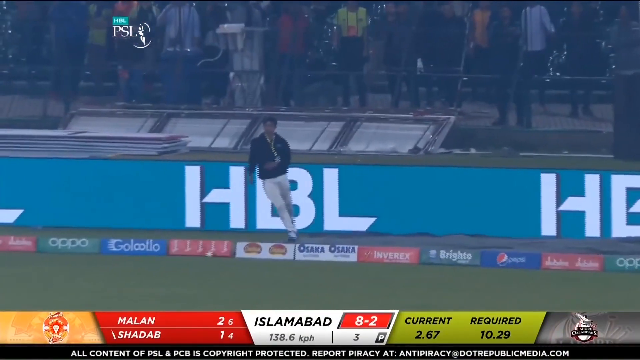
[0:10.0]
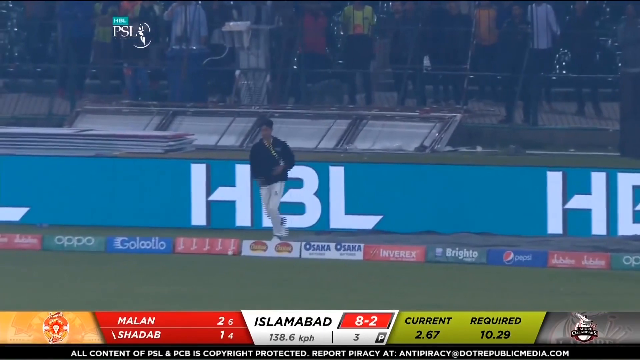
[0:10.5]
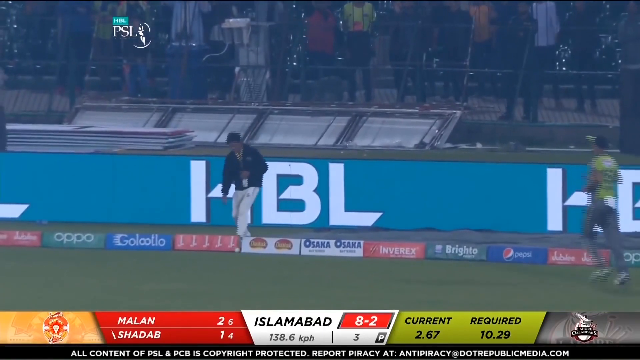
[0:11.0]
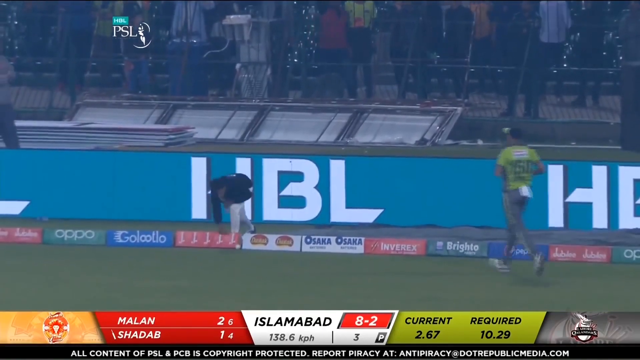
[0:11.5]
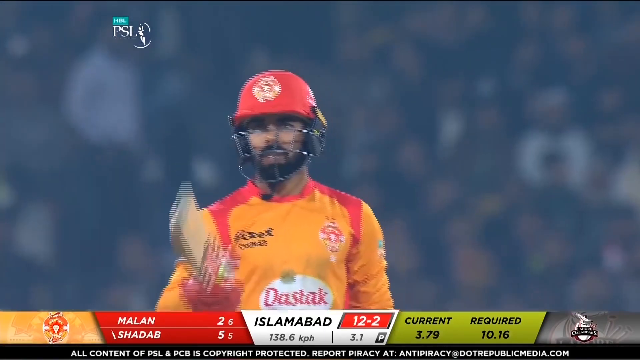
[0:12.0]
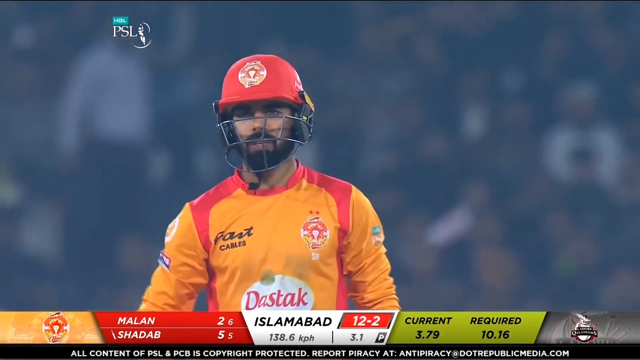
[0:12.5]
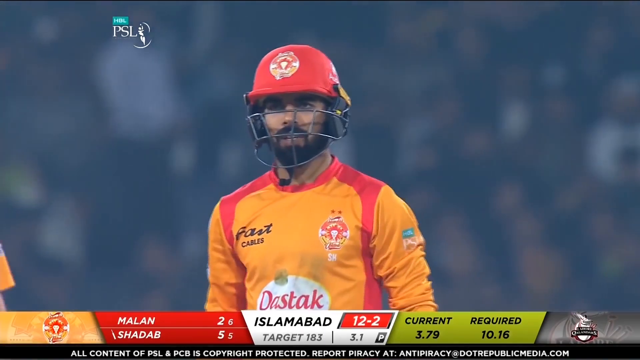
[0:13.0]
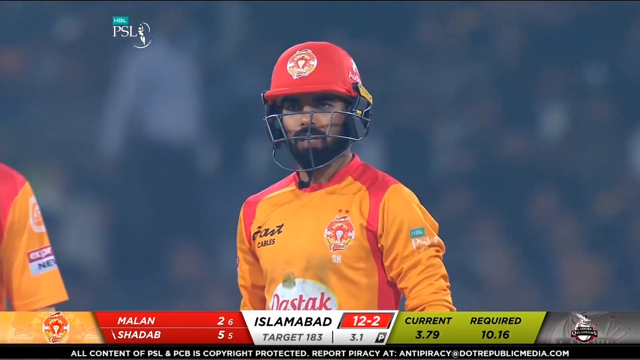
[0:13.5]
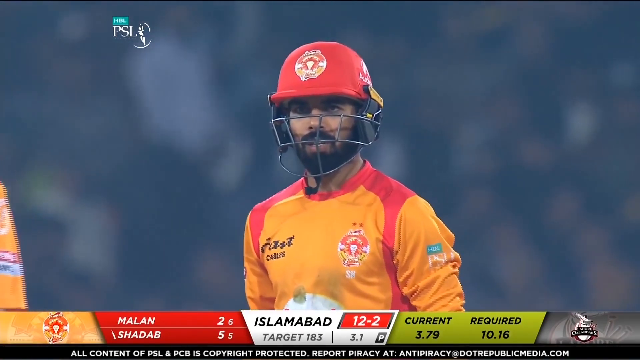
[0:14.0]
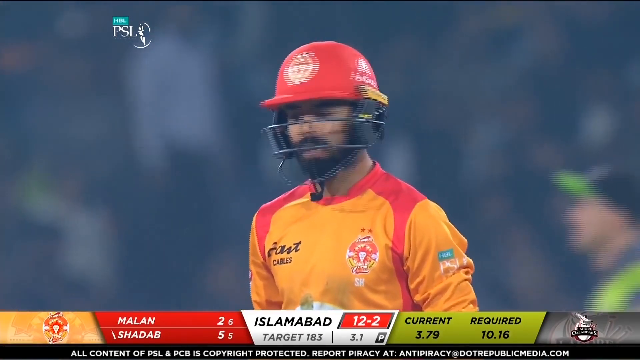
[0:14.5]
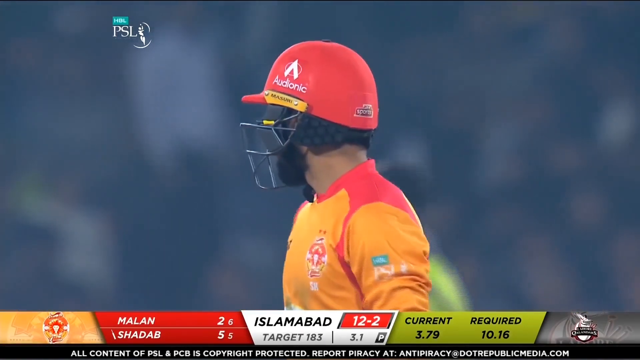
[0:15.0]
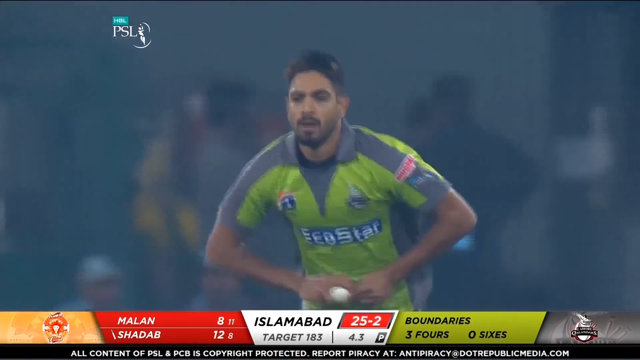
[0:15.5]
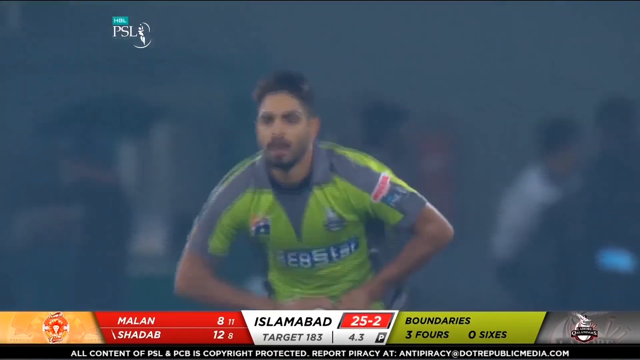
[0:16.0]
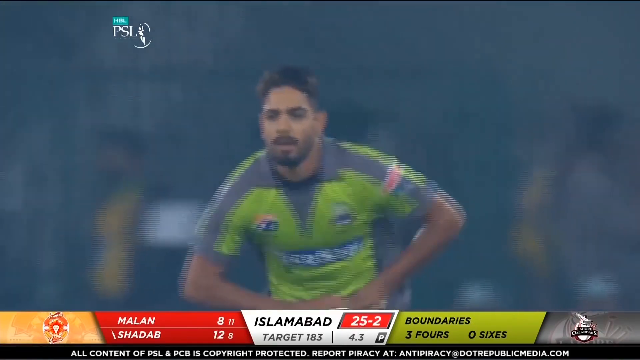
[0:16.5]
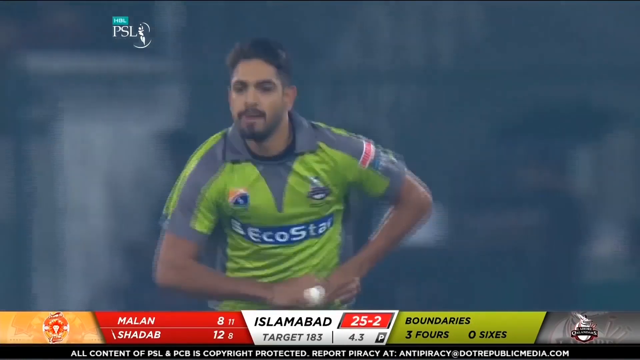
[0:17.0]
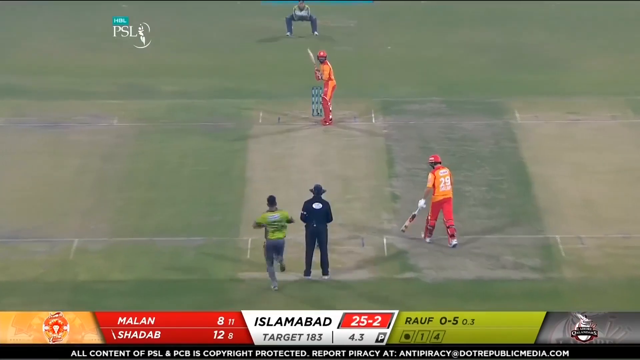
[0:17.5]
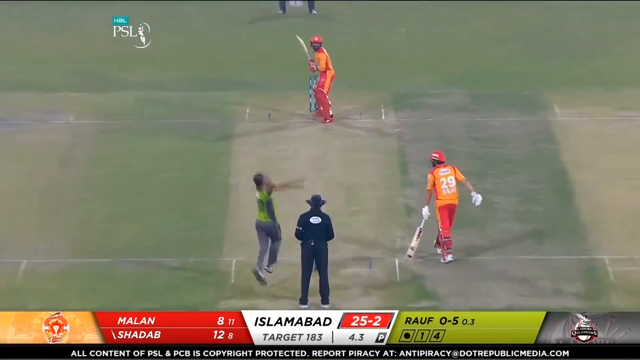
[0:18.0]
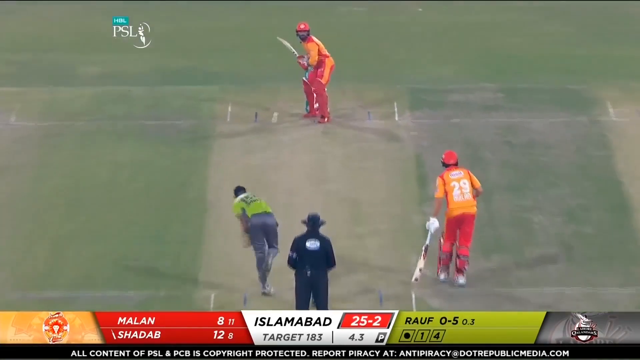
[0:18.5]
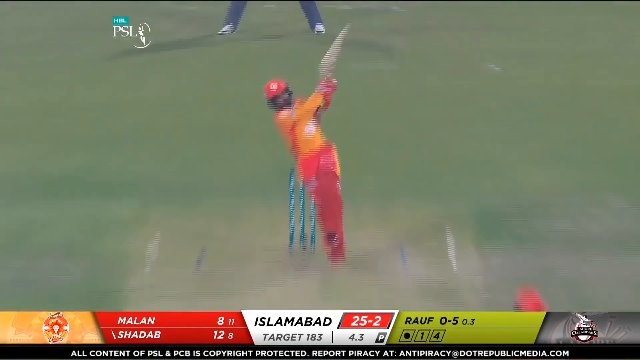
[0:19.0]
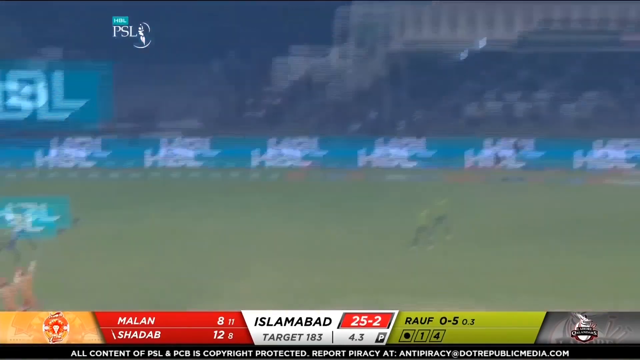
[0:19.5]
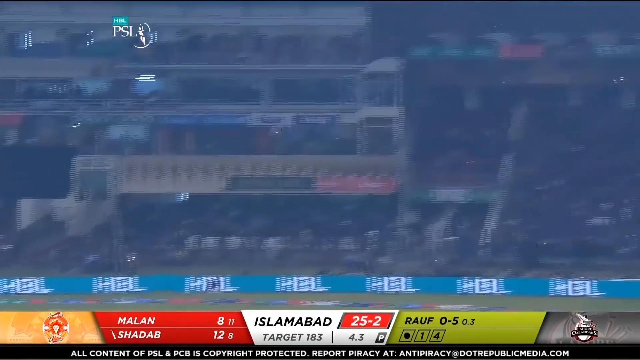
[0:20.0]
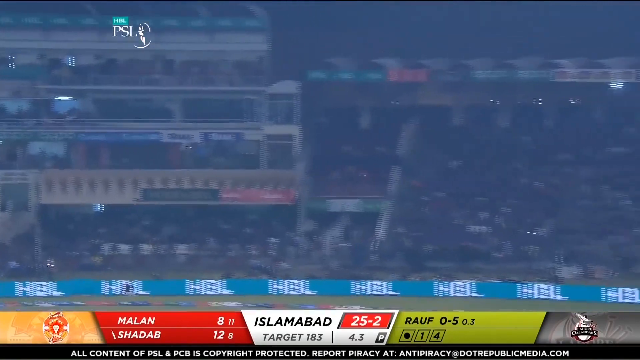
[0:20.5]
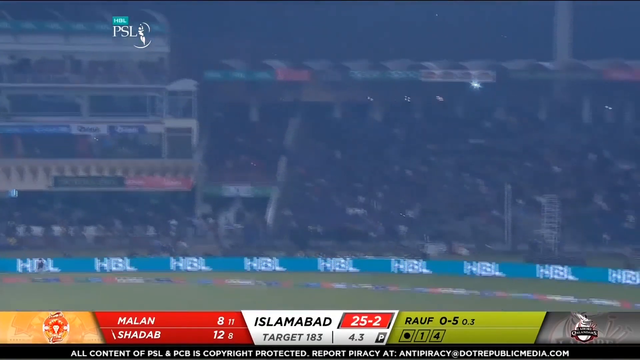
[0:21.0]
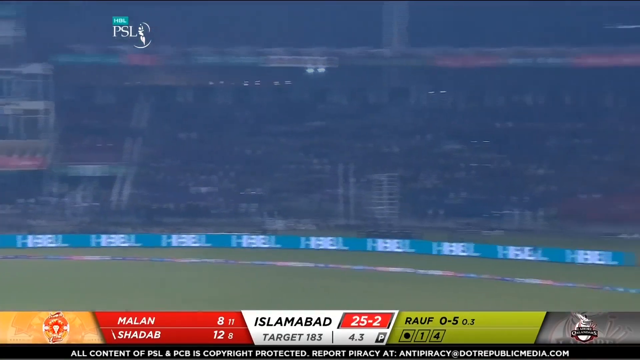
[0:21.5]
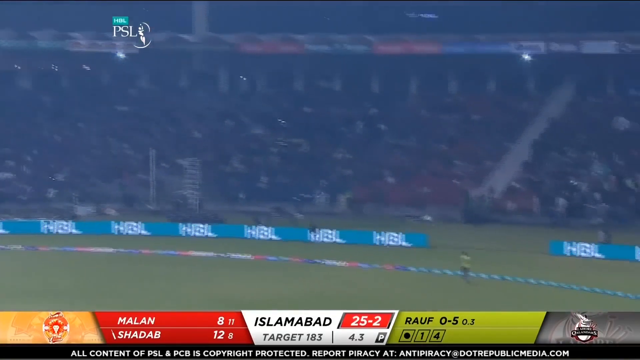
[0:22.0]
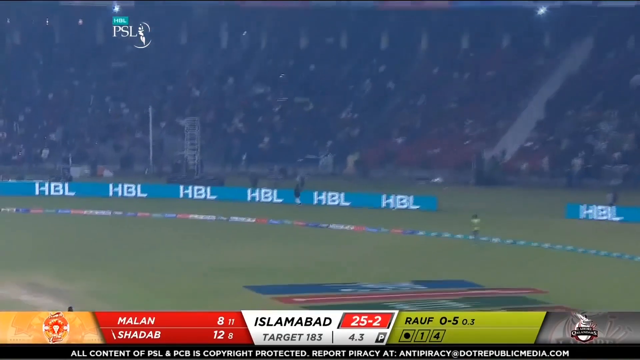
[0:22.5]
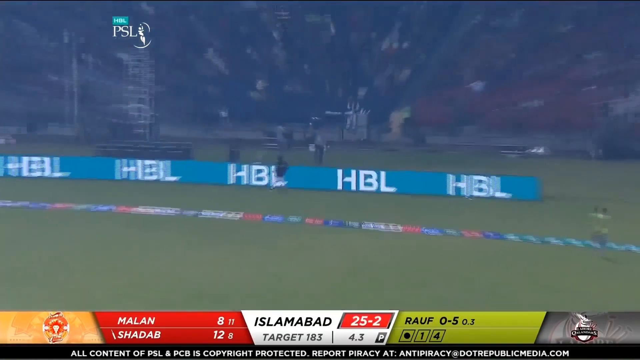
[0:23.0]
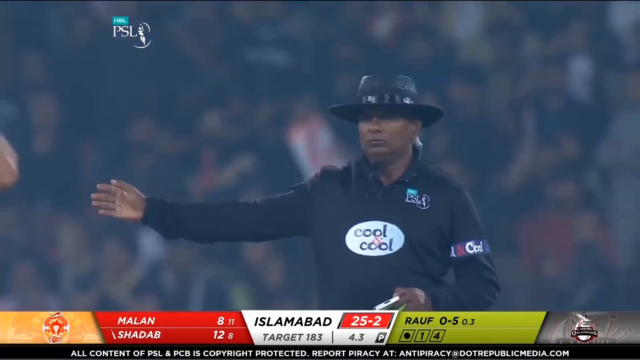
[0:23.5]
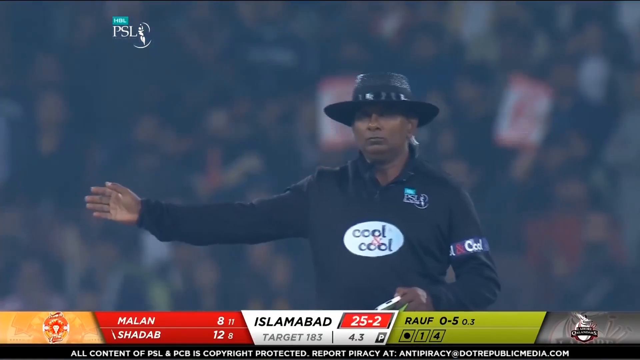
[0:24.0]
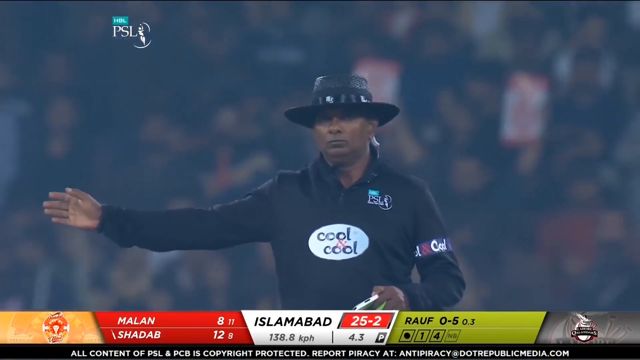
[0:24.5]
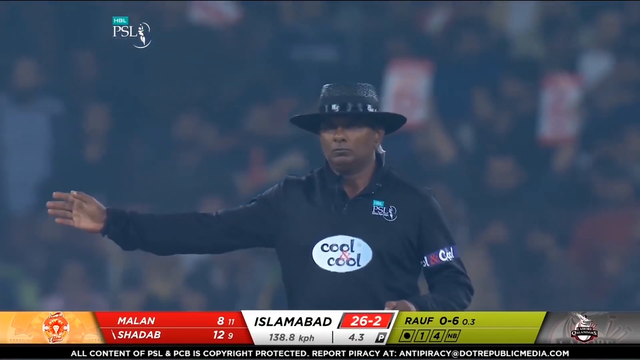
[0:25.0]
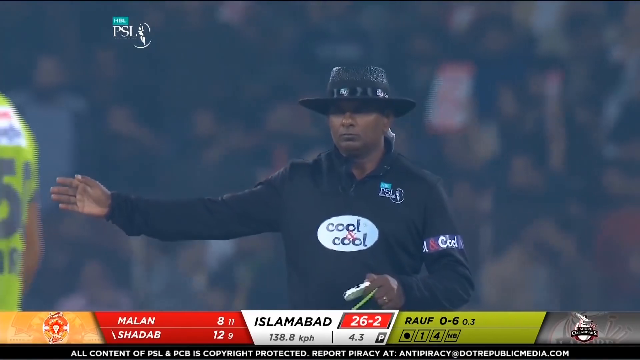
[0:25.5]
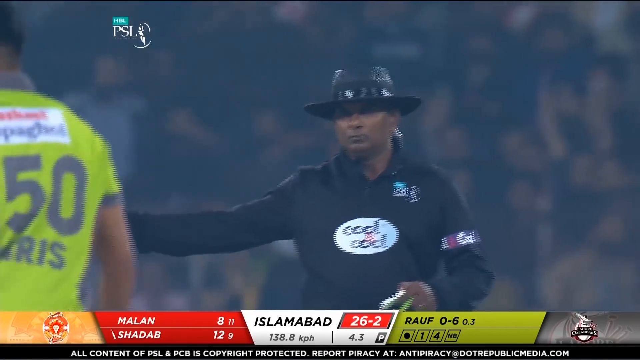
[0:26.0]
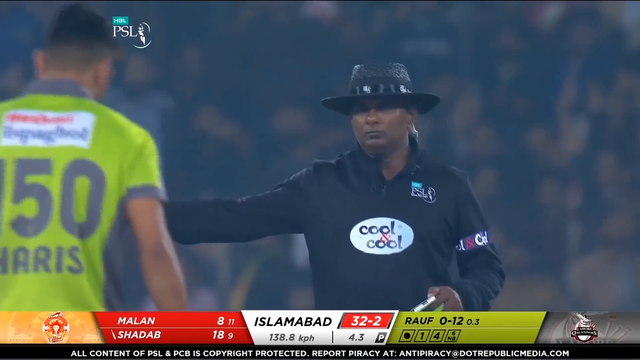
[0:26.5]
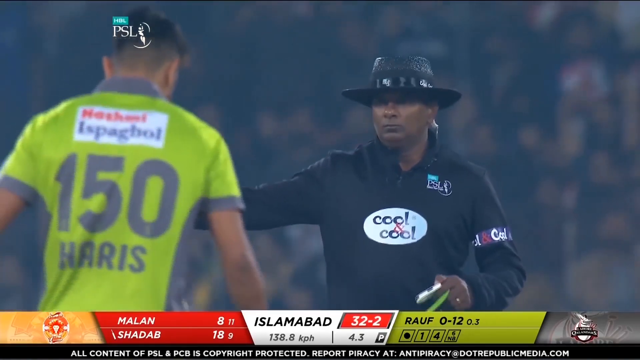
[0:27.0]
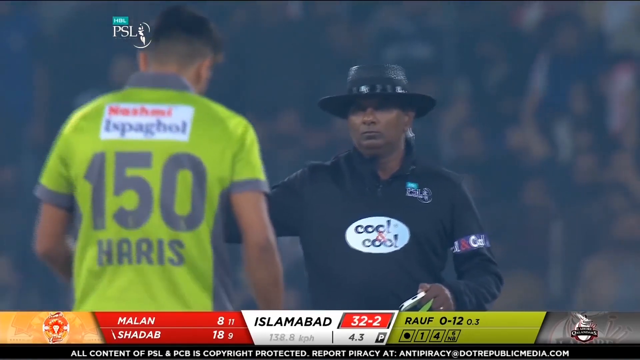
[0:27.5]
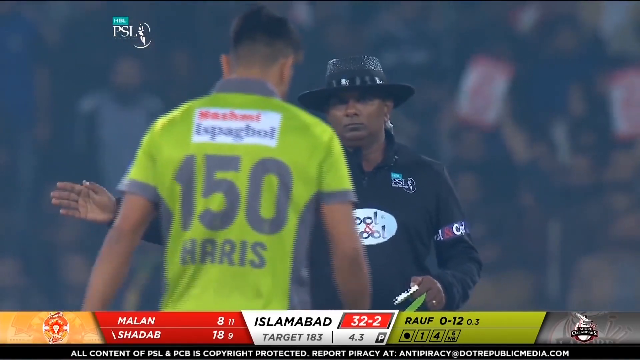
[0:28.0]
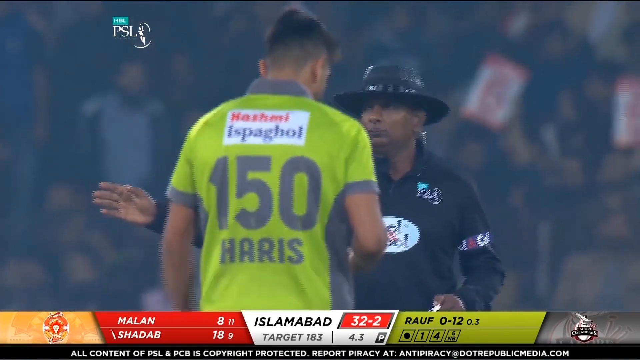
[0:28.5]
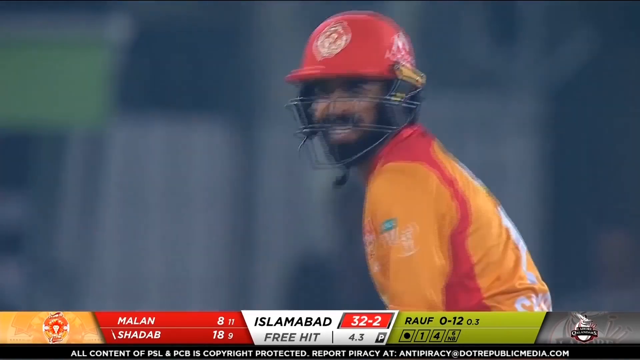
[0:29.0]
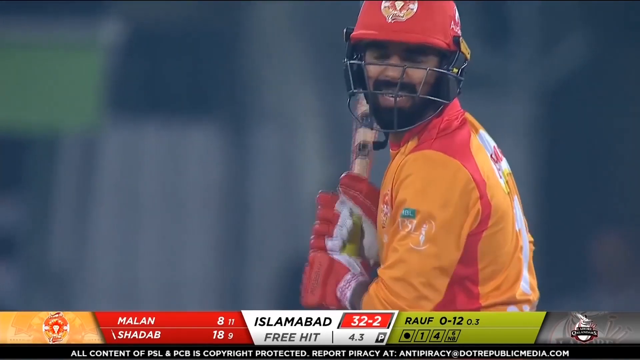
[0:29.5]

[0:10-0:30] A close-up shows the Islamabad player who has just scored four runs: he wears a red helmet and an orange shirt with red piping, and he has a beard. An opposition bowler, sponsored by EcoStar, runs in down the pitch on the left-hand side of the umpire at a good pace. Bowling right-handed, he jumps to deliver the ball with a straight arm, bowling pretty much straight at the batsman. The batsman sways to his right and connects hard, smashing the ball off the pitch and out of the ground for six runs, and the umpire signals a six.